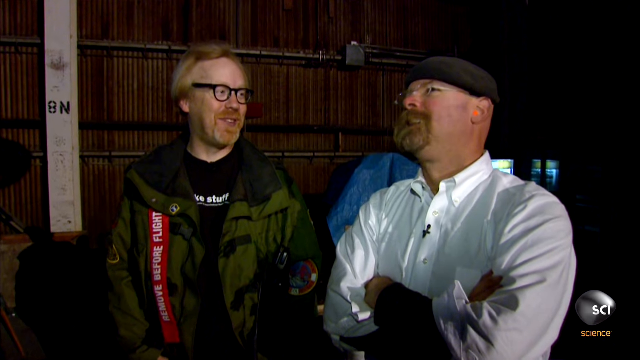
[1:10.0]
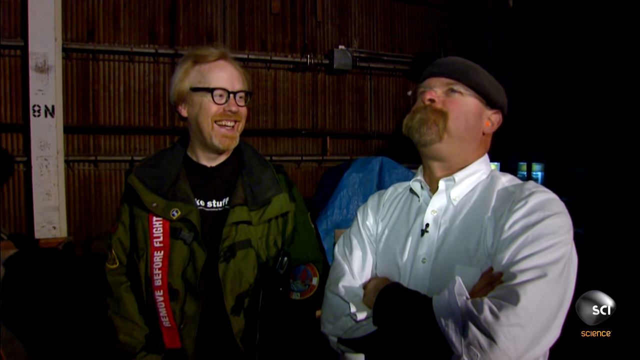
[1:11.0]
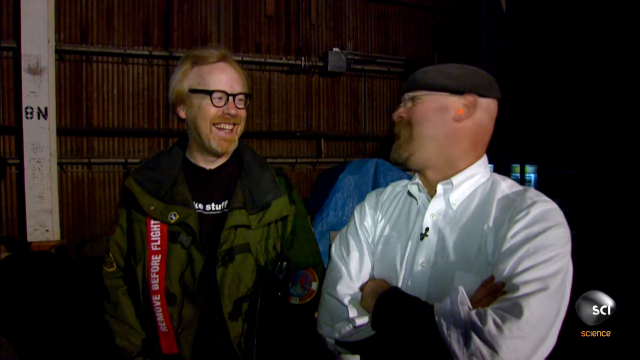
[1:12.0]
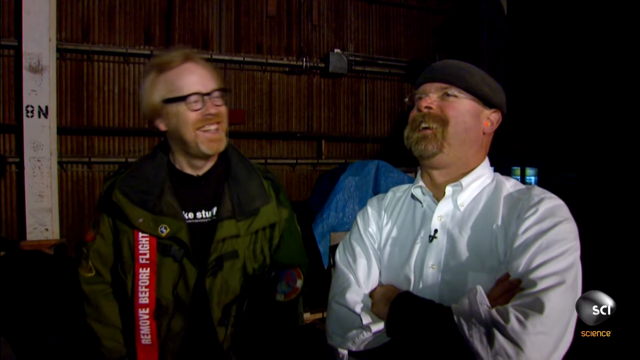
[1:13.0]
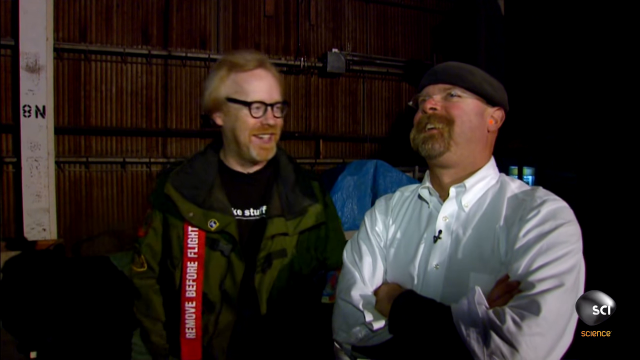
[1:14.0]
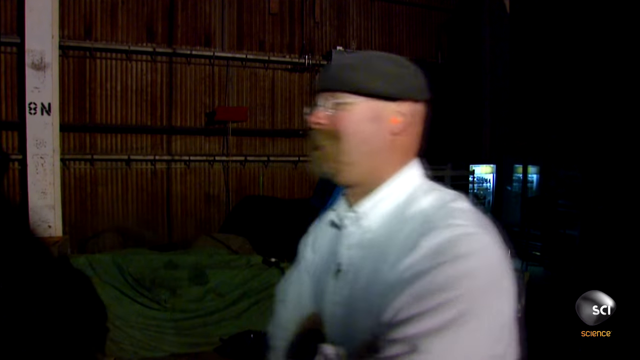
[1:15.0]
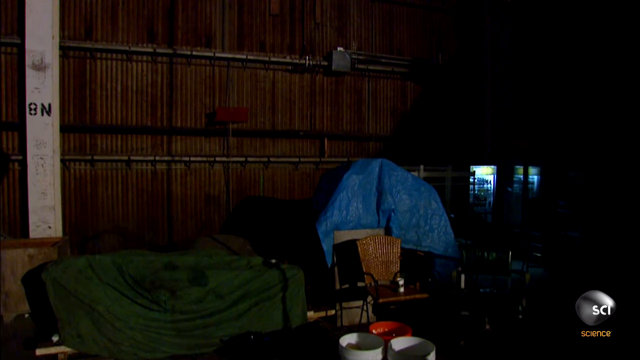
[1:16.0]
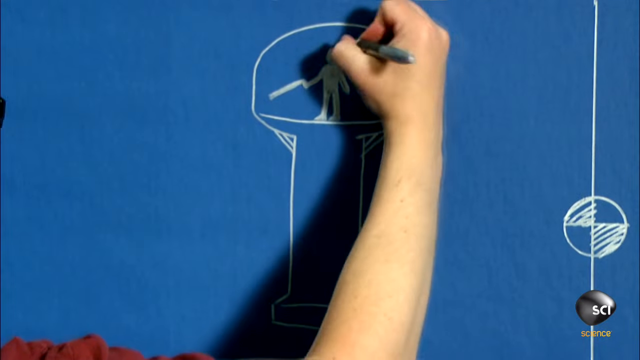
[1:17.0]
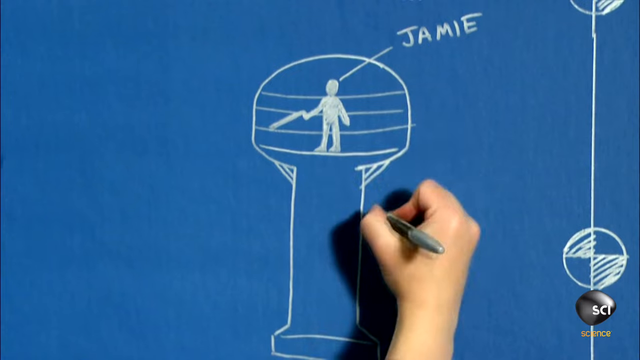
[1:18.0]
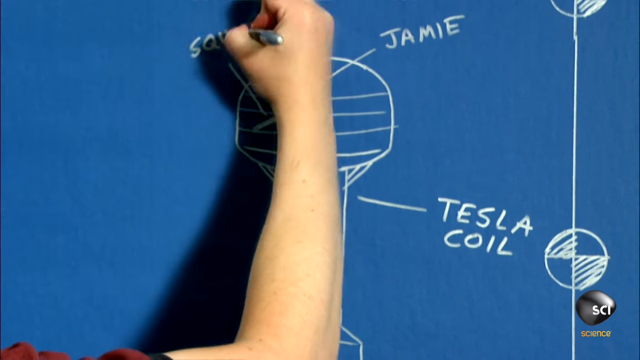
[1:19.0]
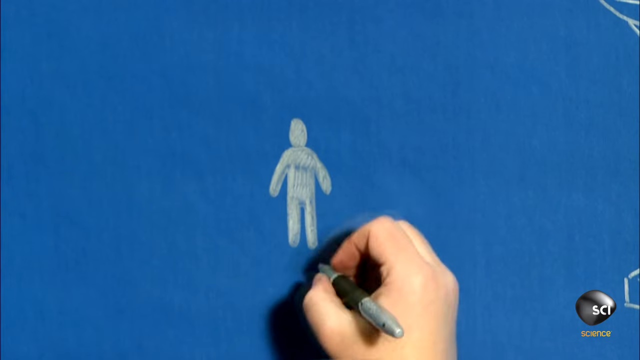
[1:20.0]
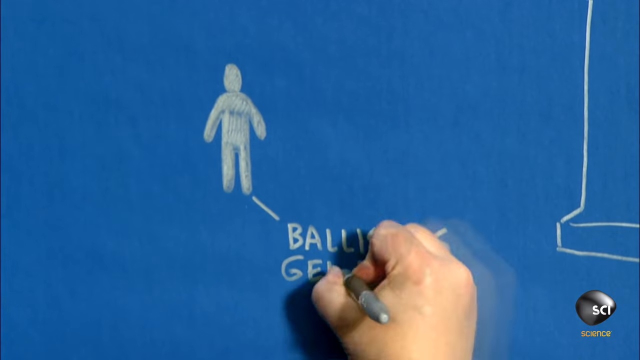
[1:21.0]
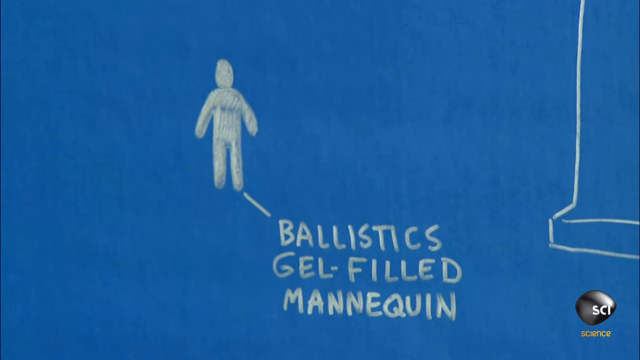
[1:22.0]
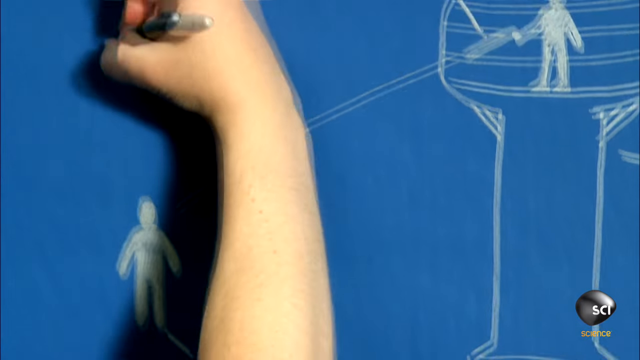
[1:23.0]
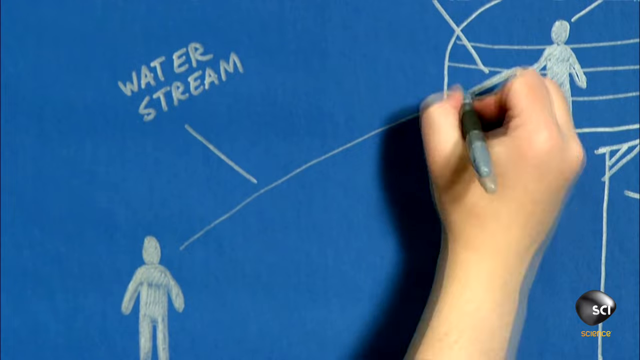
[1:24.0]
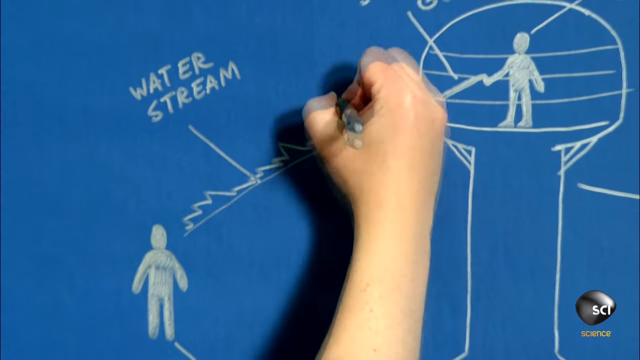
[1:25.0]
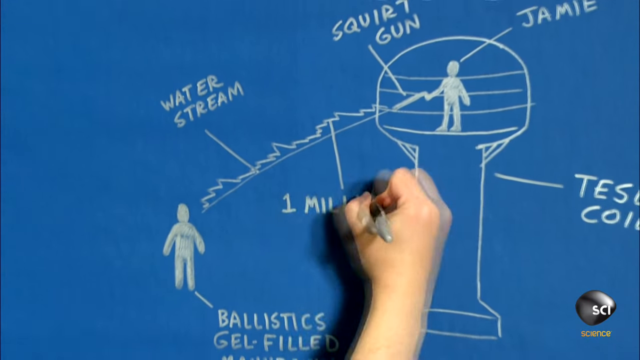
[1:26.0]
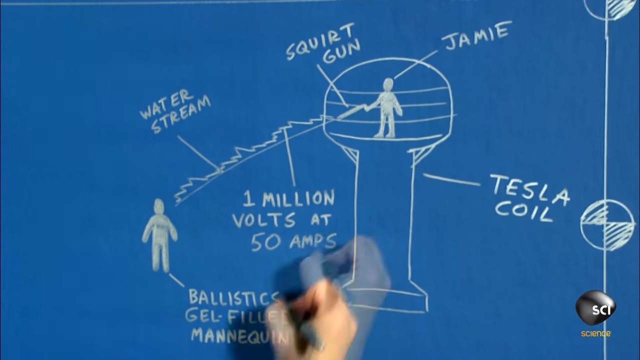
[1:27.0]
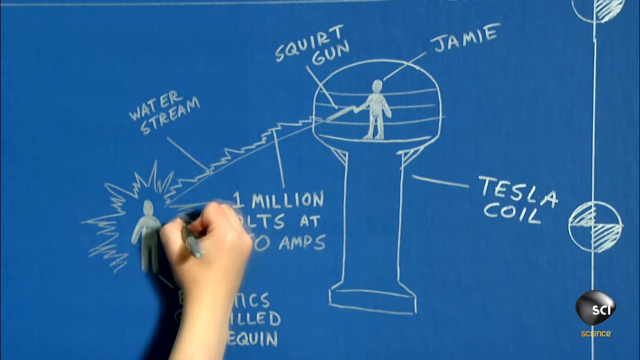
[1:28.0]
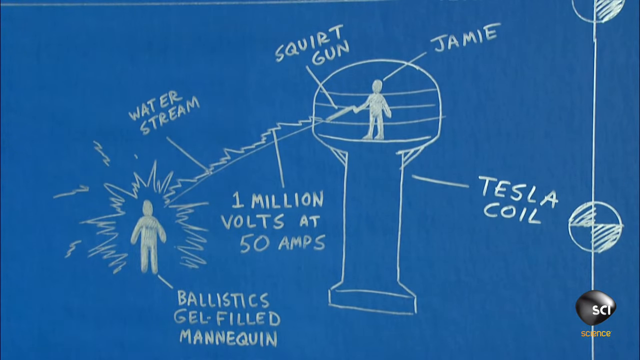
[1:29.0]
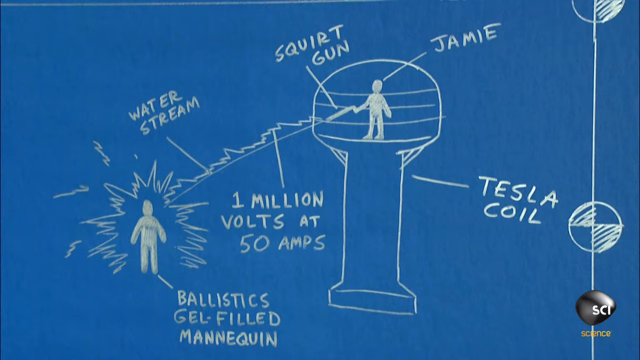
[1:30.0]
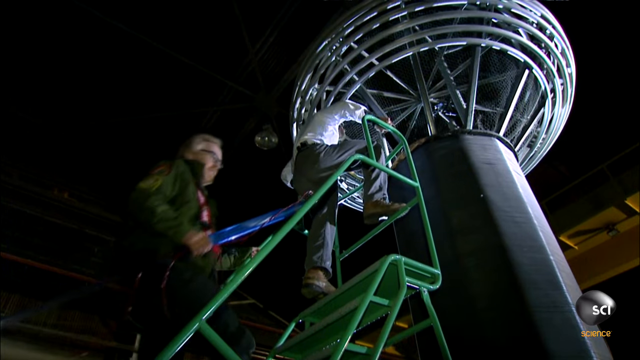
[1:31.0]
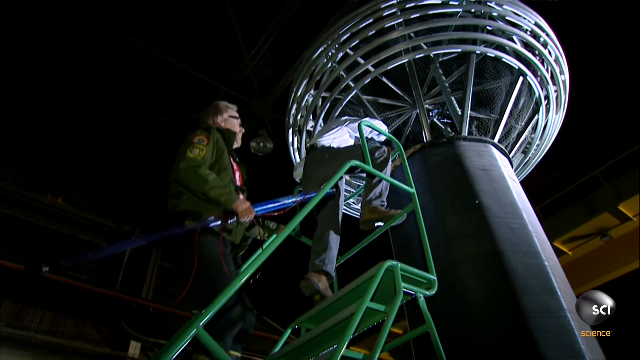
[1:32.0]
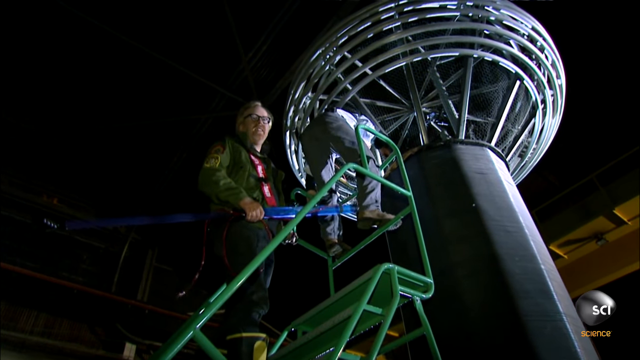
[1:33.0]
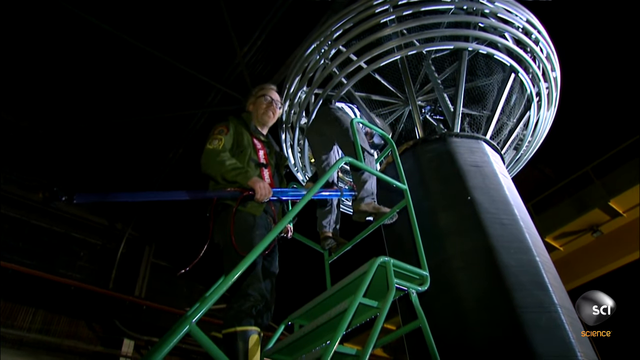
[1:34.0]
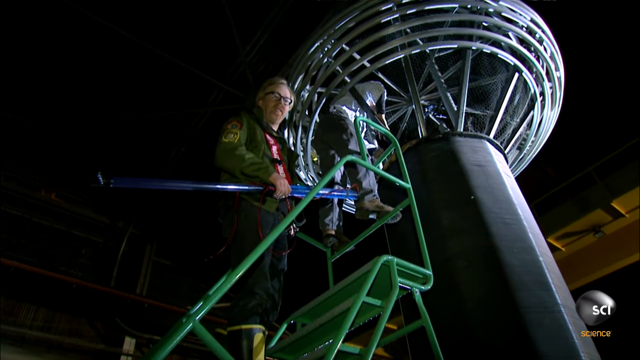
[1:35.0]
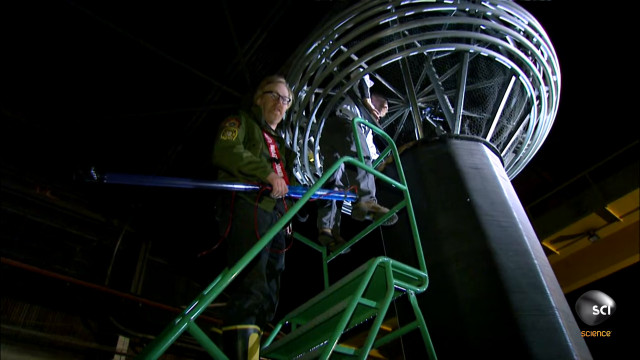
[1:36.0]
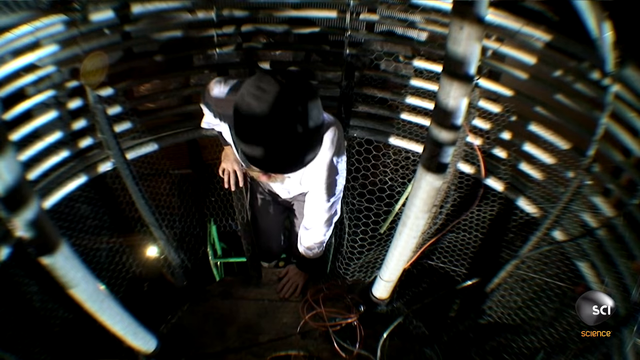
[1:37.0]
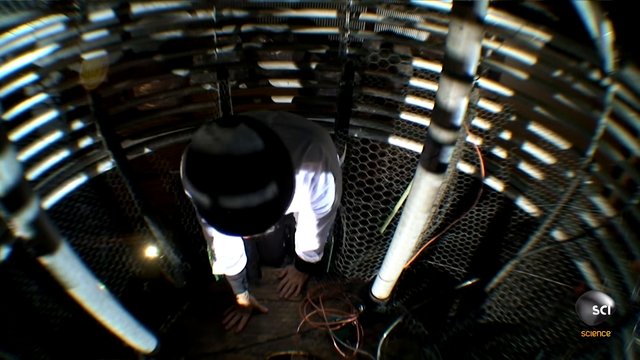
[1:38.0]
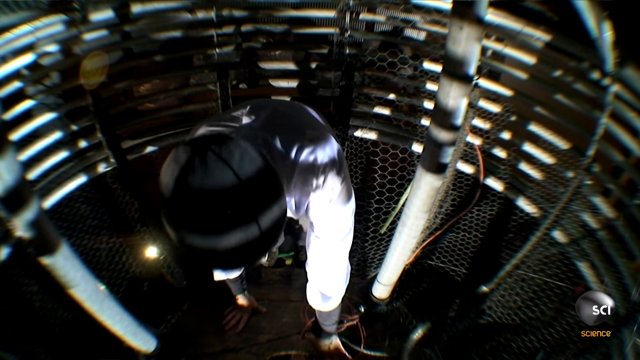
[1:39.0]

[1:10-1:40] Having just witnessed the lightning, the co-hosts laugh. Then there is a drawing on a board of the Tesla coil, apparently laying out the plan: Jamie in the Tesla coil with a squirt gun aimed at a ballistics gel-filled mannequin, a water stream, and a million volts at 50 amps.